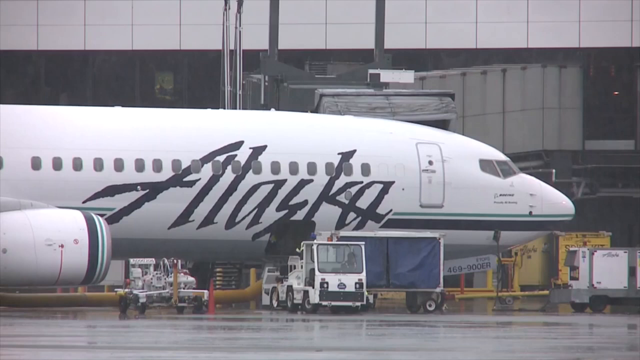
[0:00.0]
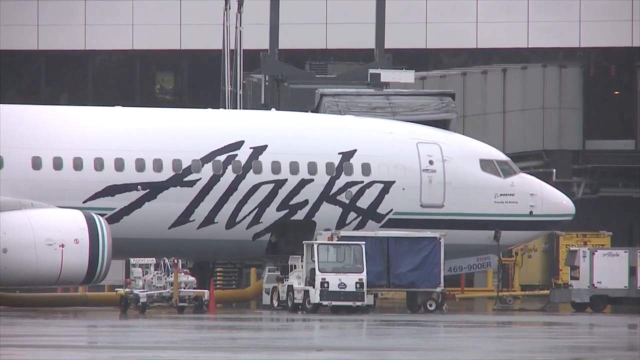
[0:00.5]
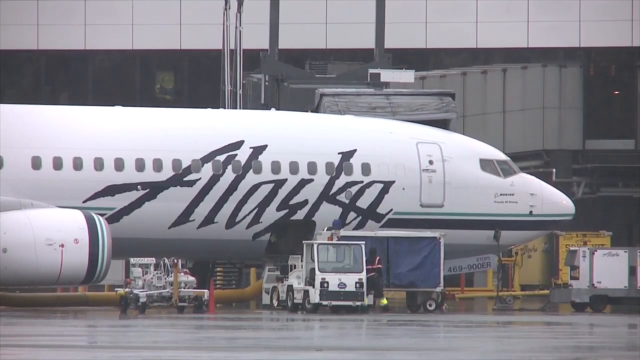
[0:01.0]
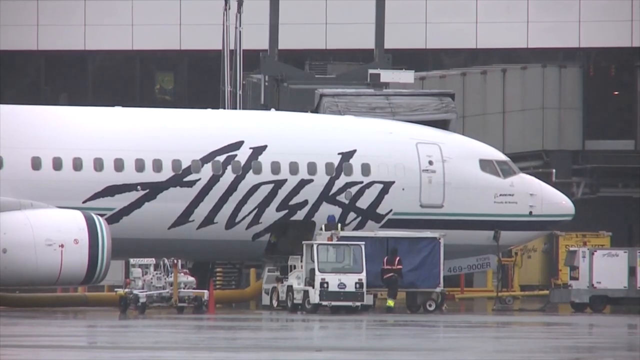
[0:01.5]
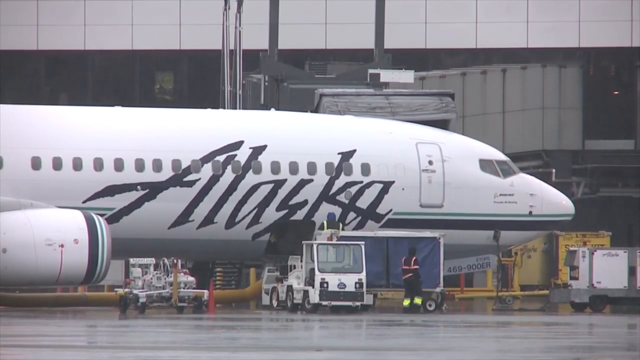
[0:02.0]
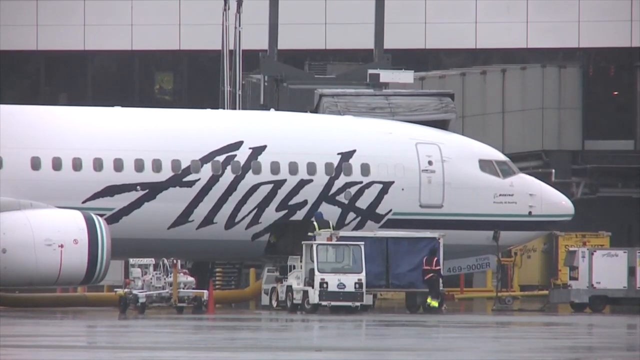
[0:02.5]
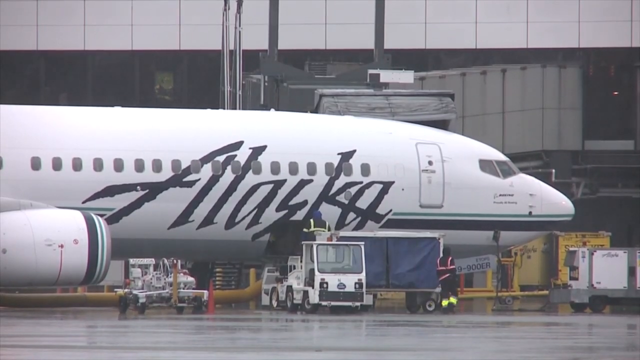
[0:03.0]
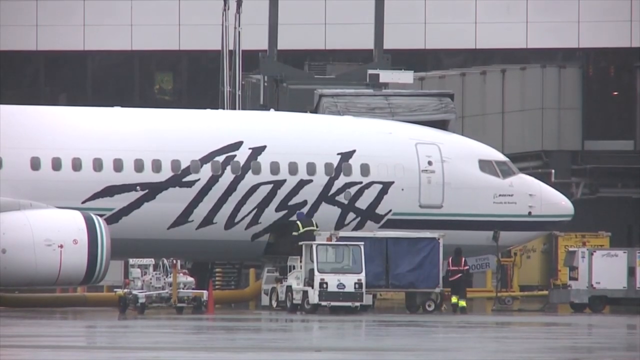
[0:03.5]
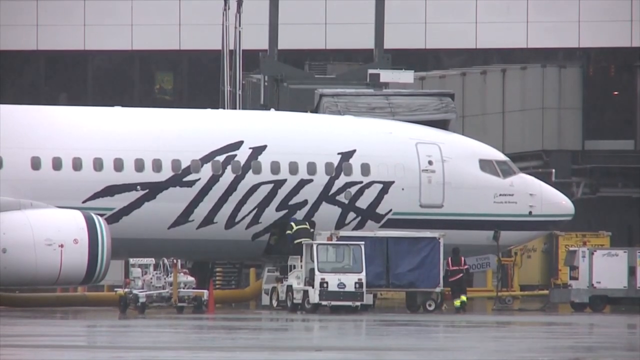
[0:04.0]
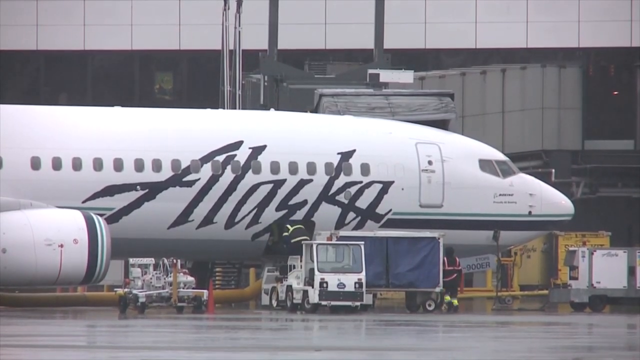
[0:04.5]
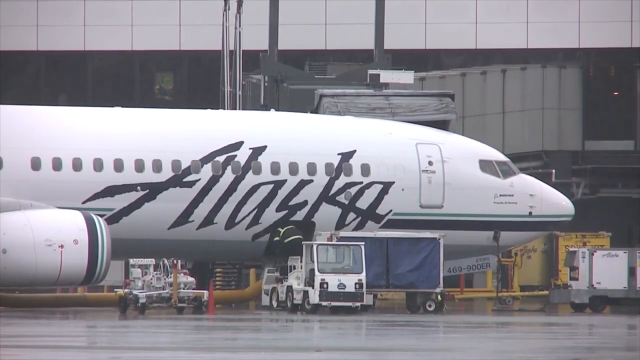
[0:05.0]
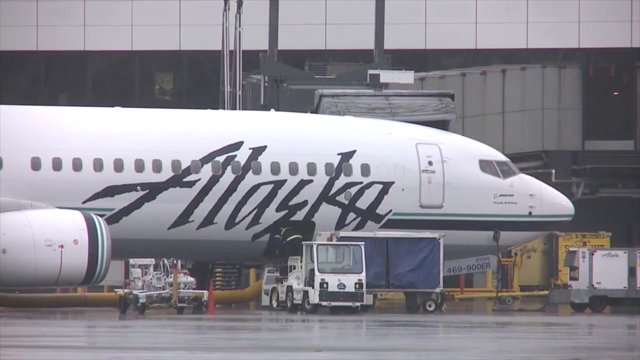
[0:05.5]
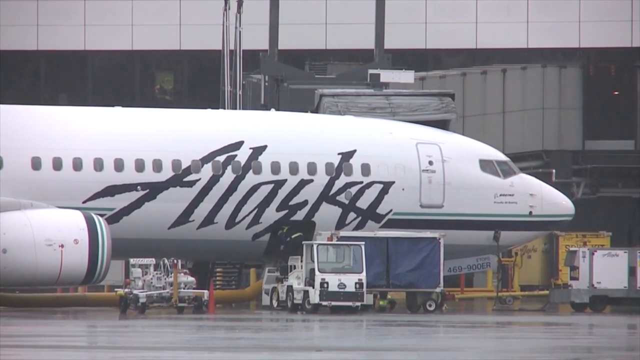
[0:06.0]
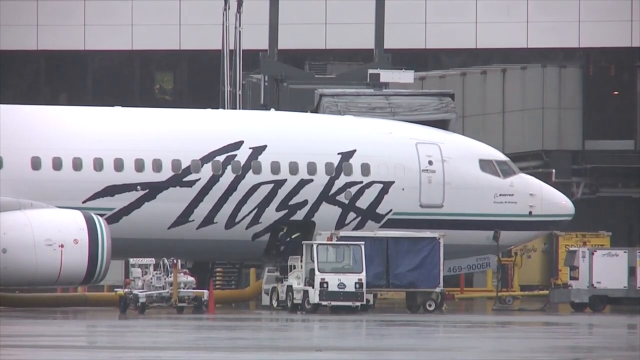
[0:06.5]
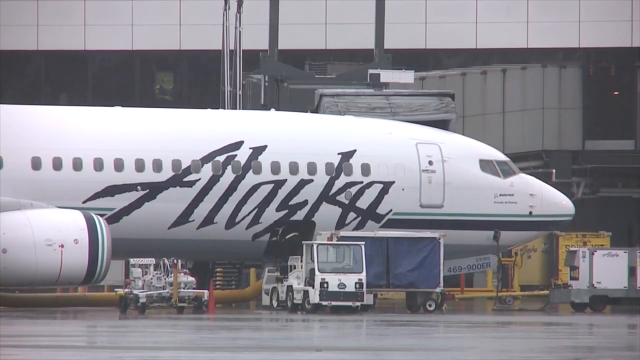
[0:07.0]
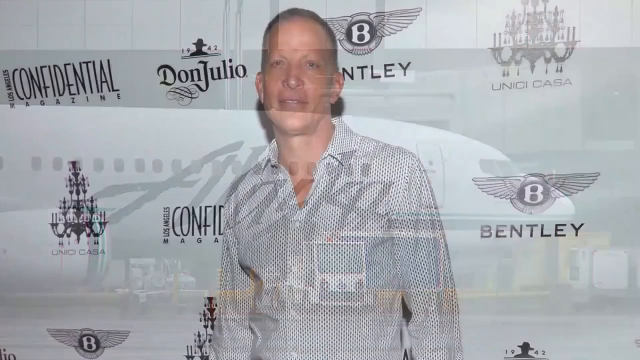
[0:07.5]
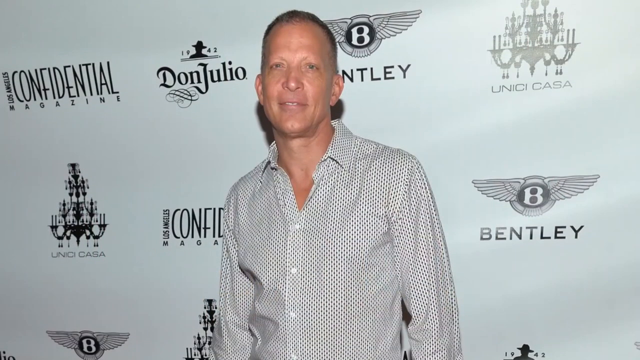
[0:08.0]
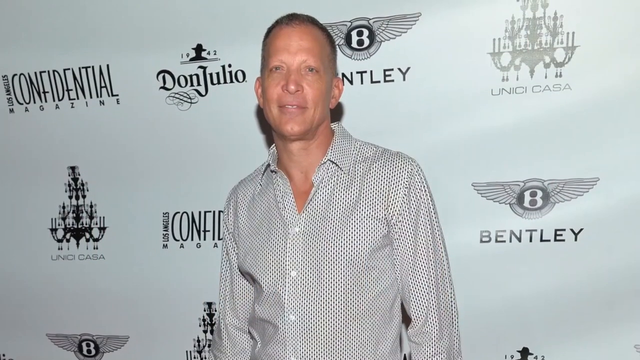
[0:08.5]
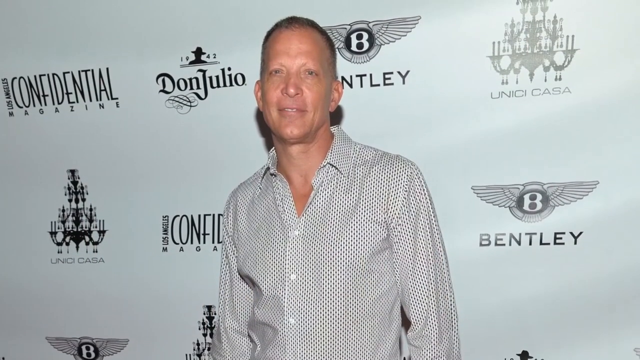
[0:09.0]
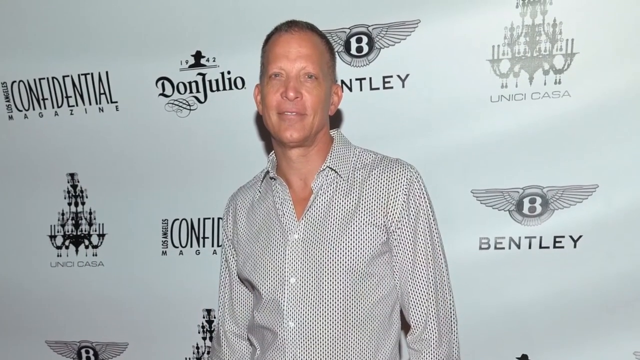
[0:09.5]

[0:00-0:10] At an airport, a big white aeroplane with "Alaska" written on it in black is surrounded by many machines and people. Some of the people enter the aeroplane. The scene changes to a picture of a man in a black and white shirt standing in front of a poster with "Confidential" written on it; he has short black hair and is smiling. The scene changes again to the same picture of the aeroplane outside the airport, with many machines and cars parked by it. Other yellow machines are shown, and two people in blue work suits with reflectors are around the aeroplane; they seem to be fixing it, while another person enters the aeroplane through the door at the back. There is a body with the numbers "469900 DER" below the aeroplane.